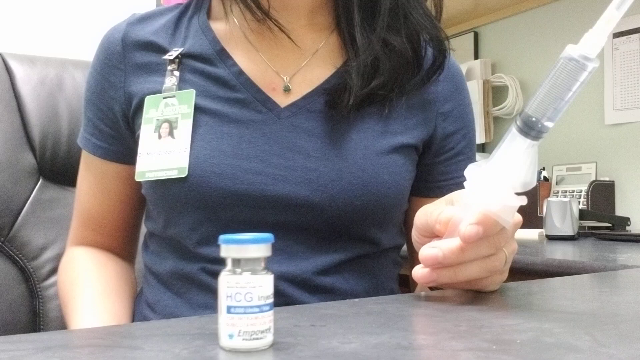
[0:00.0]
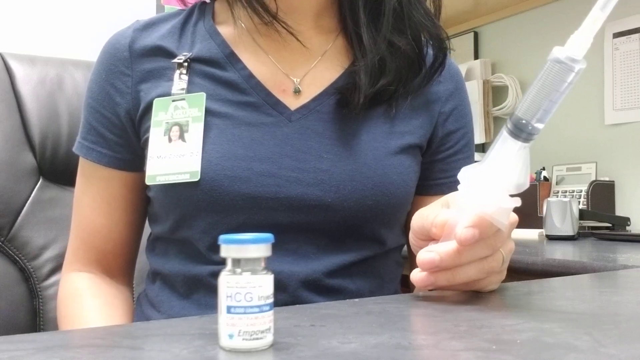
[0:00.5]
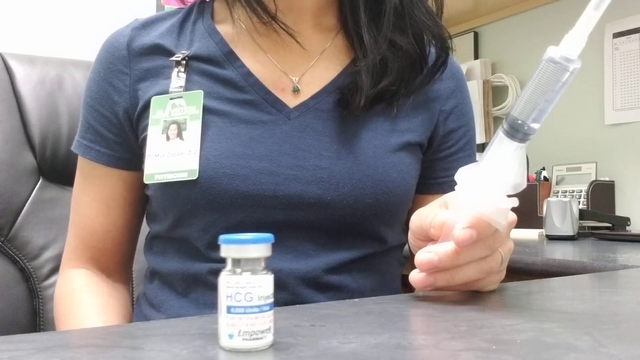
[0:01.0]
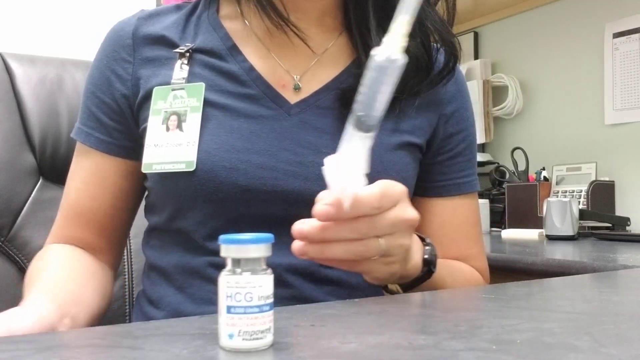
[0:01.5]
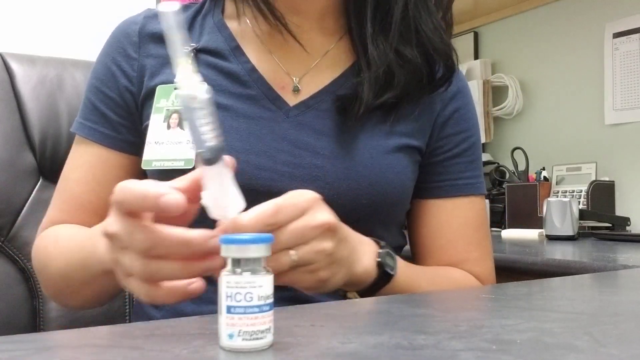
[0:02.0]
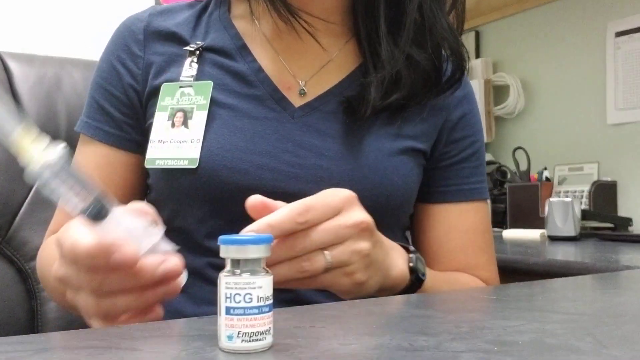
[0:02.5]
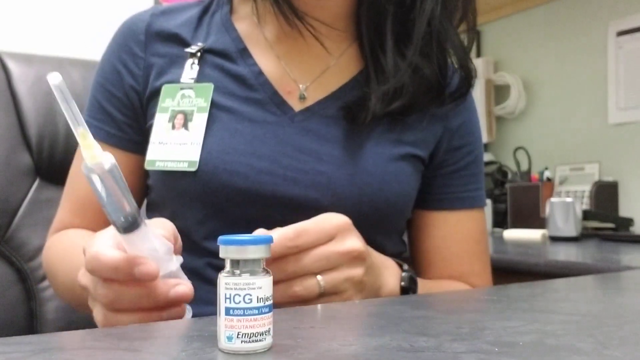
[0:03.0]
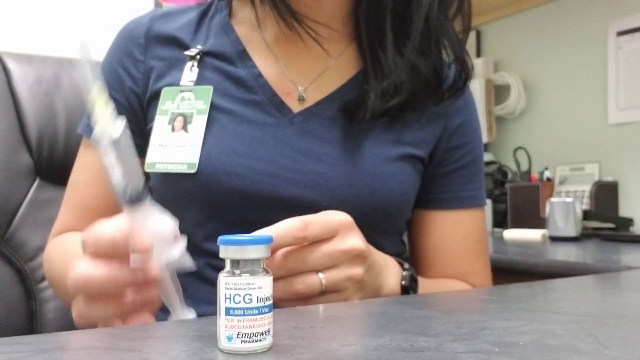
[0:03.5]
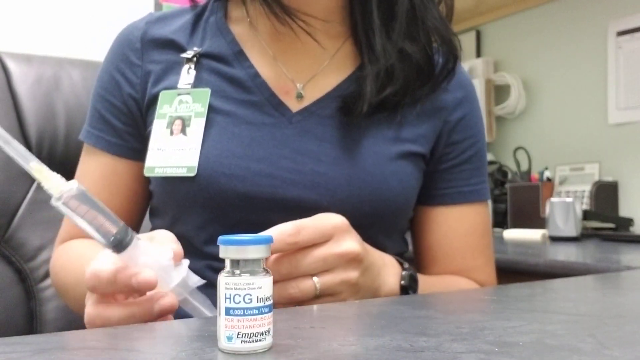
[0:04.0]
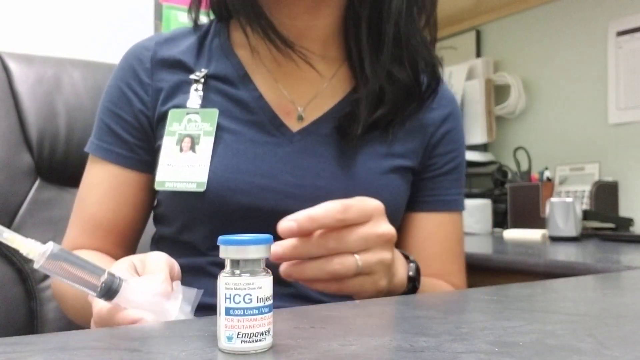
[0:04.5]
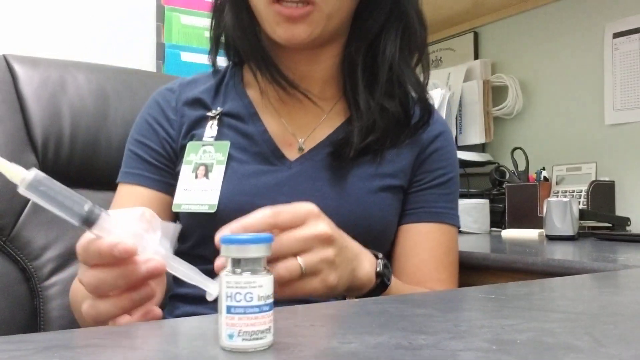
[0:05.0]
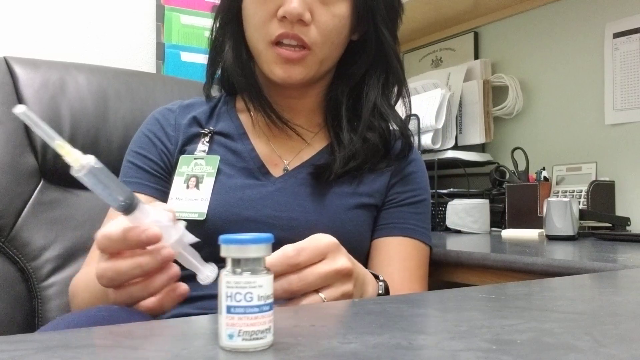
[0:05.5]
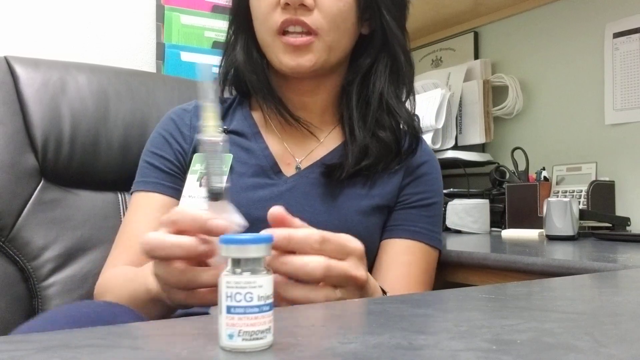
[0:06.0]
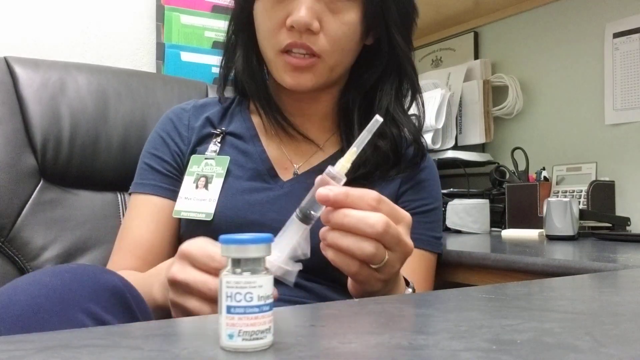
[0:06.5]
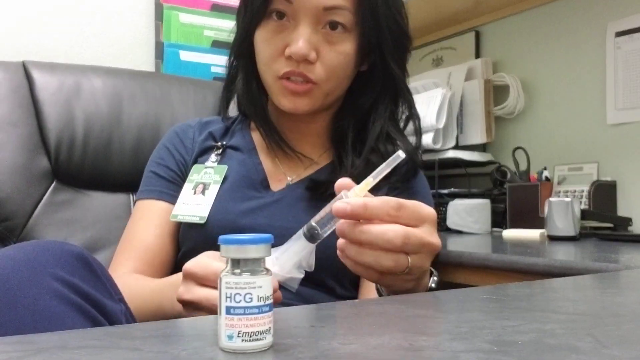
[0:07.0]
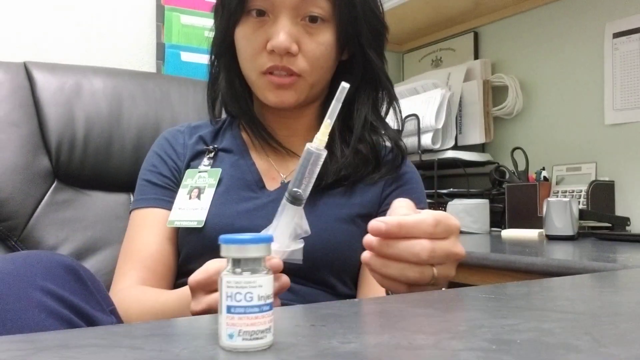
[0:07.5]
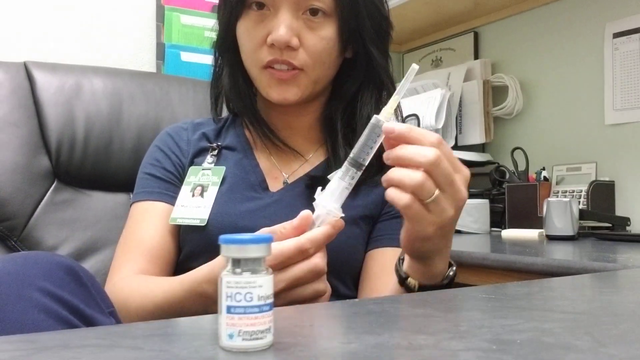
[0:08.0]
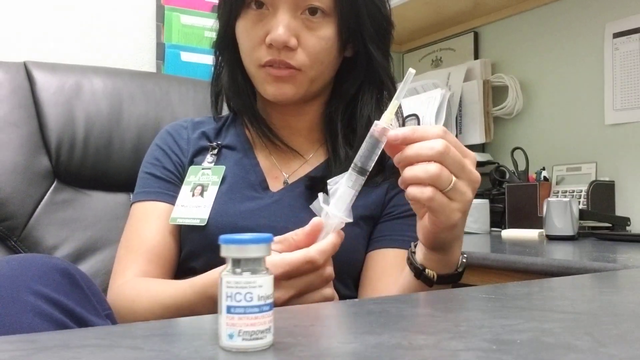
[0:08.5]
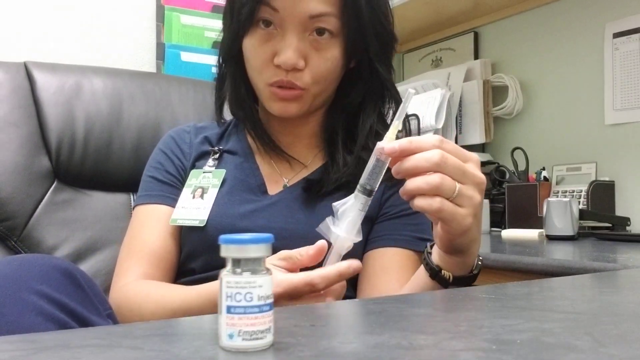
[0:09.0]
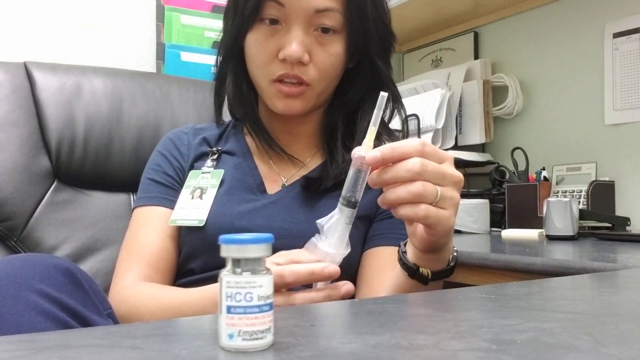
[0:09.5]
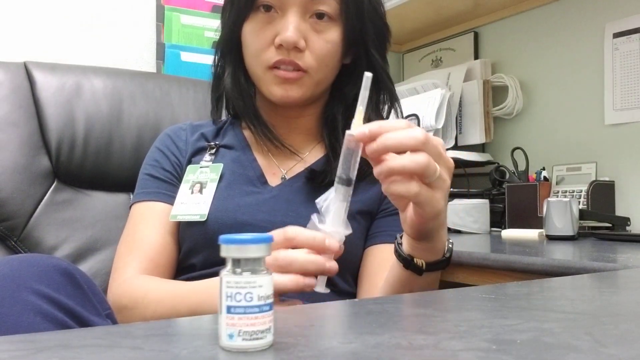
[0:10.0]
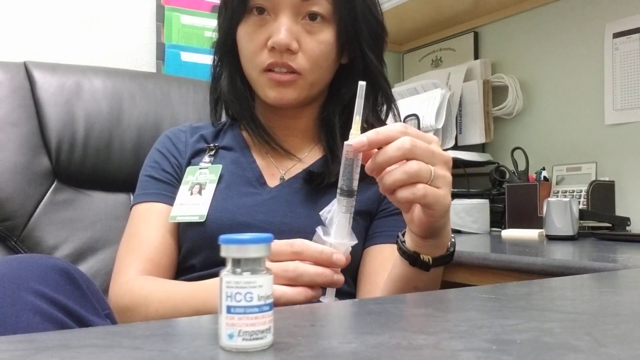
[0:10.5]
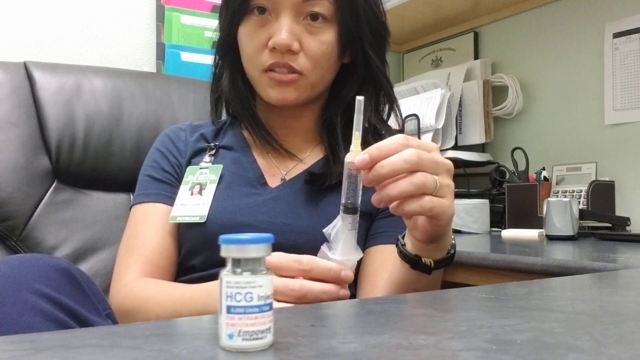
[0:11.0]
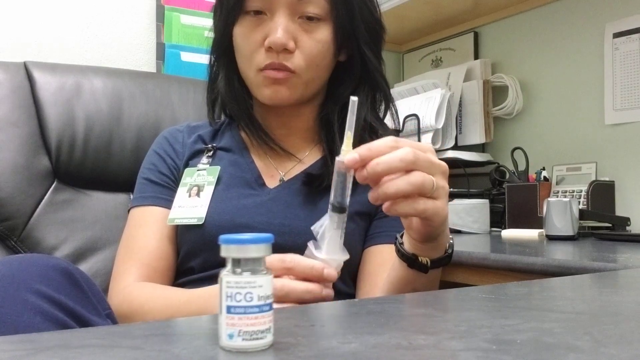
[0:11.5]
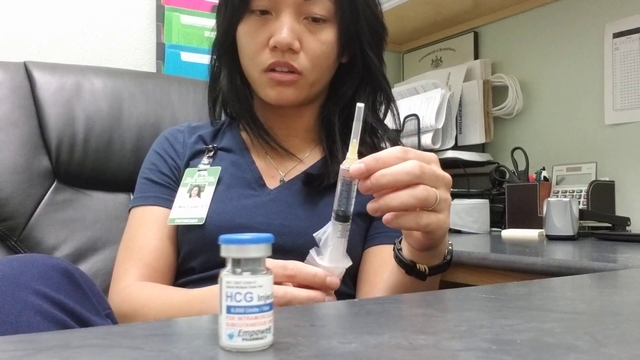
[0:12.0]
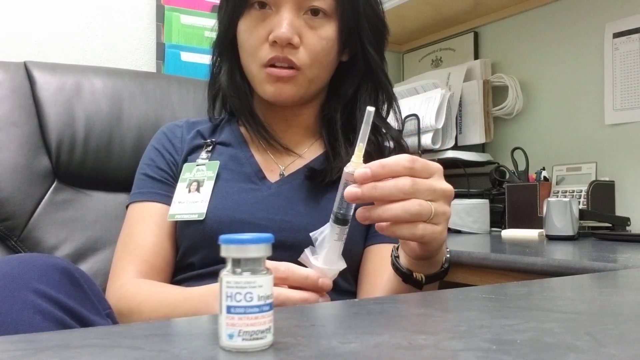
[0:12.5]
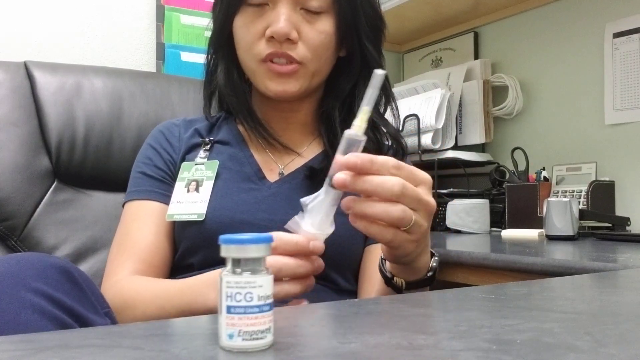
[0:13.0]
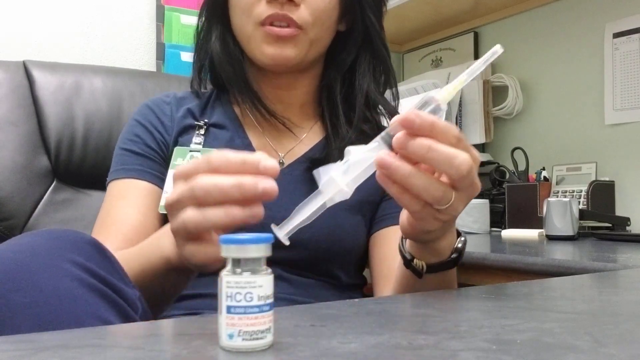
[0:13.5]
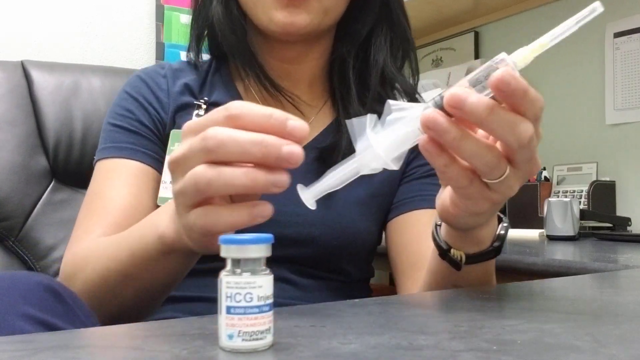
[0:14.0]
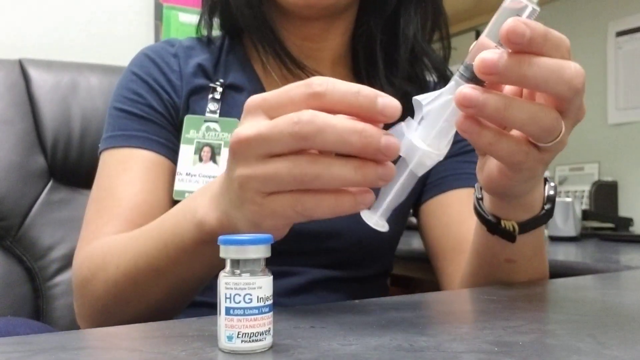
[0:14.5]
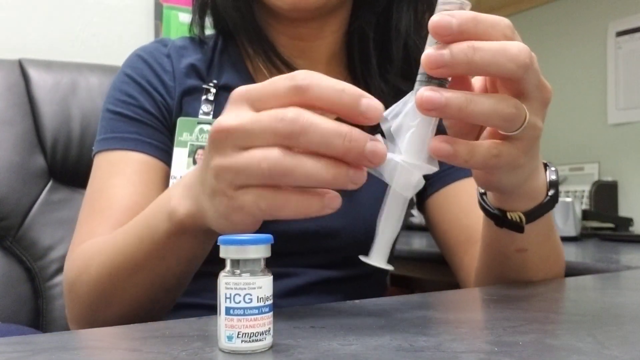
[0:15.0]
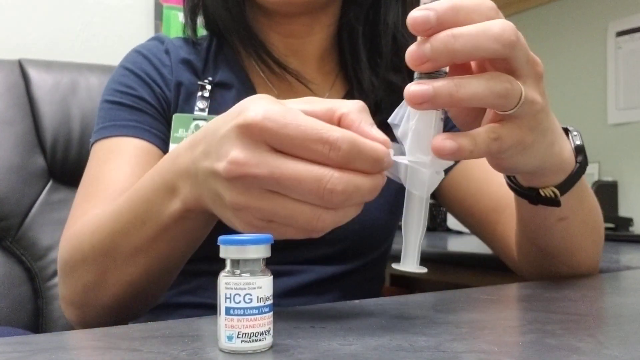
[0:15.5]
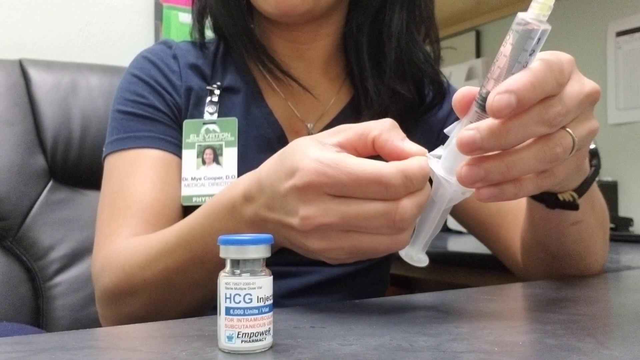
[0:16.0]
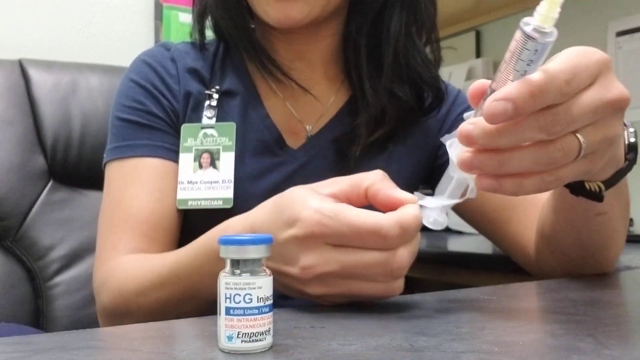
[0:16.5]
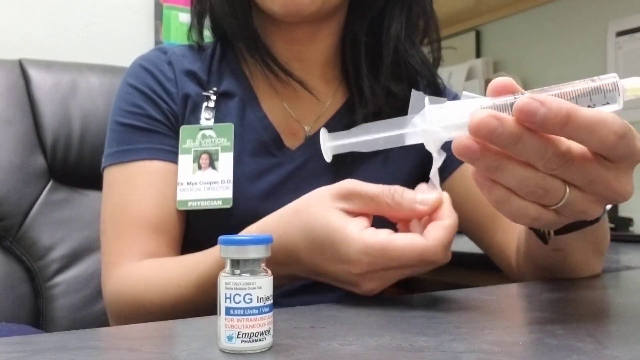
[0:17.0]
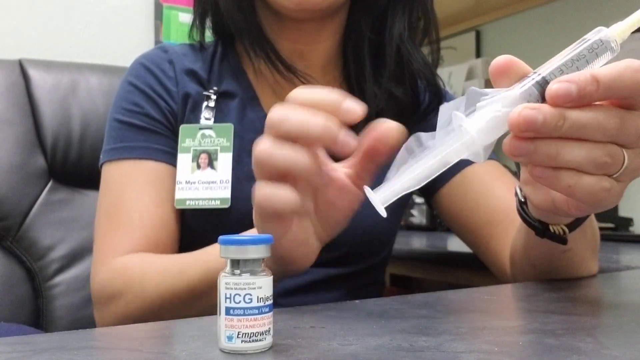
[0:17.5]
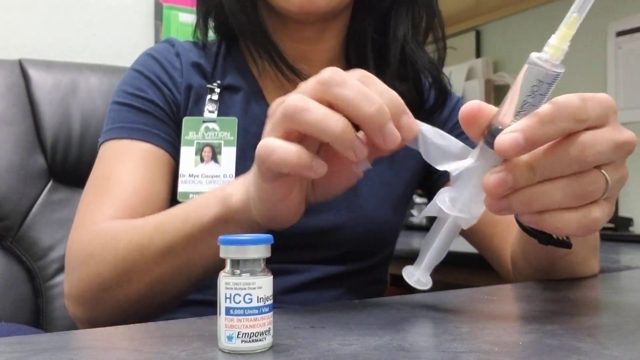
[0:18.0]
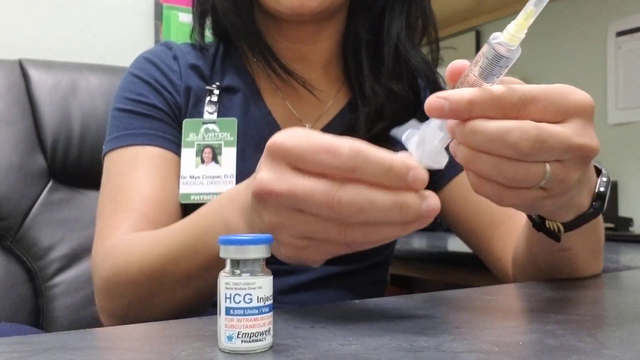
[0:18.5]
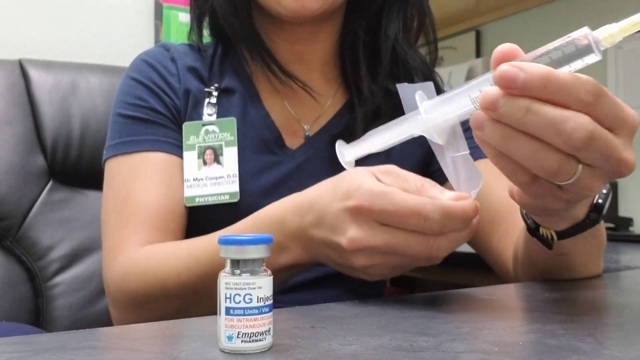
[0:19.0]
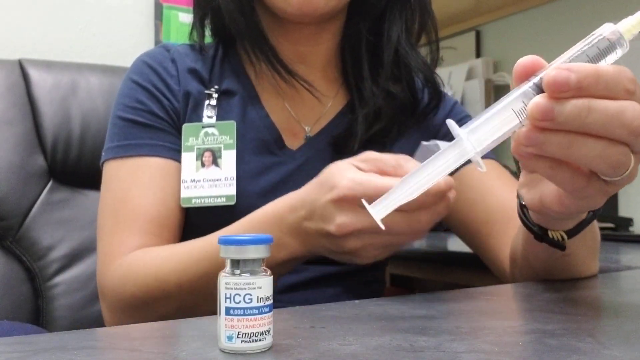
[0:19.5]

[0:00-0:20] The video begins with a close-up of the torso, chest, shoulders and arms of a person wearing a navy scrub shirt, with an illegible ID tag on the right shoulder. The person appears to be holding some sort of medical device, and there is a bottle in front of them. The woman leans back in her chair, revealing her face, and speaks to the camera while holding the device, which looks like something that might be used to inject a patient. The little bottle in front of her says "HCG injection". She is in an office, sitting at a desk, and unwraps the injector part of the medication. She displays the injector to the camera in close-ups, holding it closer to the camera as she unwraps it.